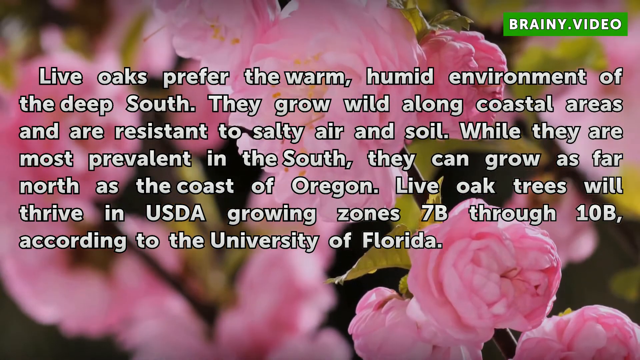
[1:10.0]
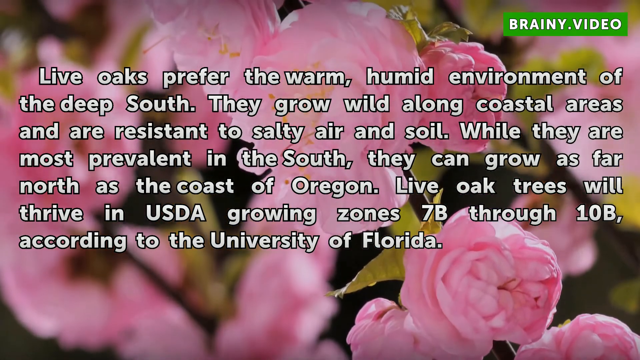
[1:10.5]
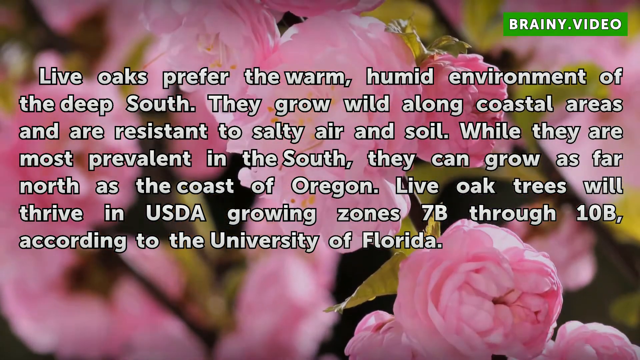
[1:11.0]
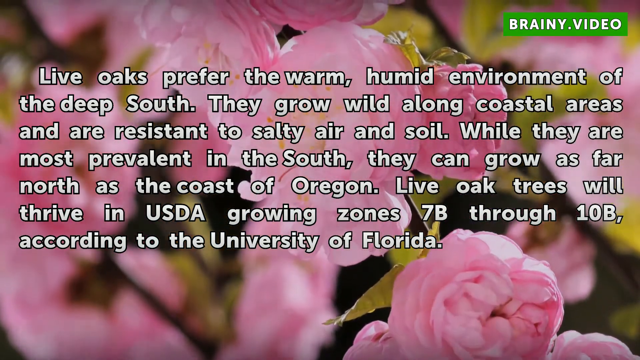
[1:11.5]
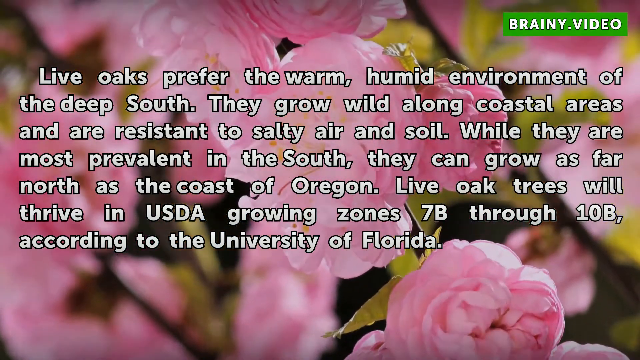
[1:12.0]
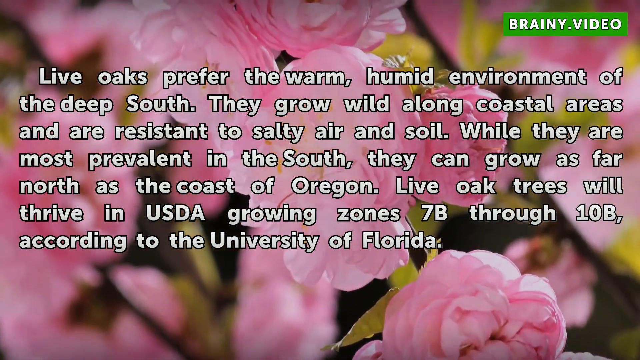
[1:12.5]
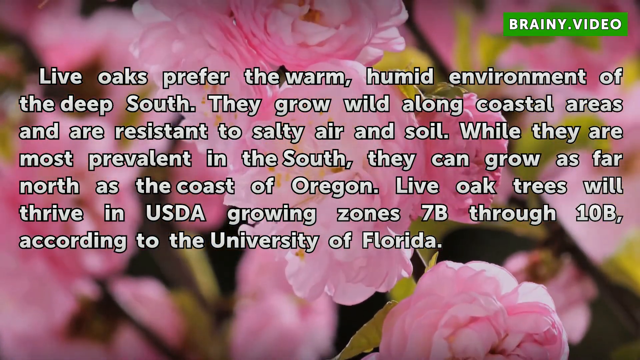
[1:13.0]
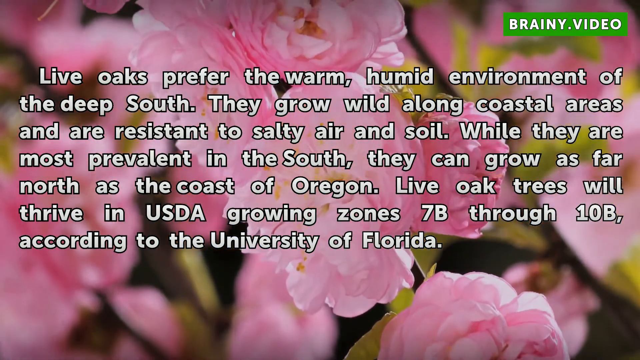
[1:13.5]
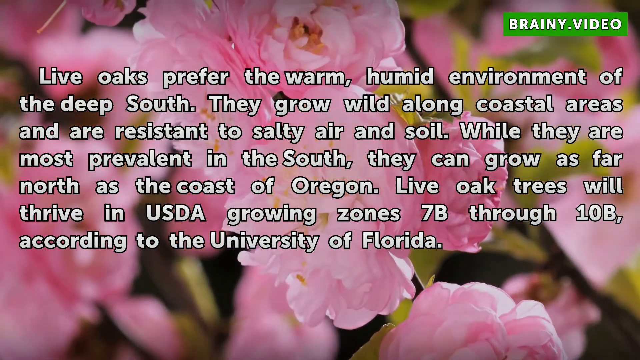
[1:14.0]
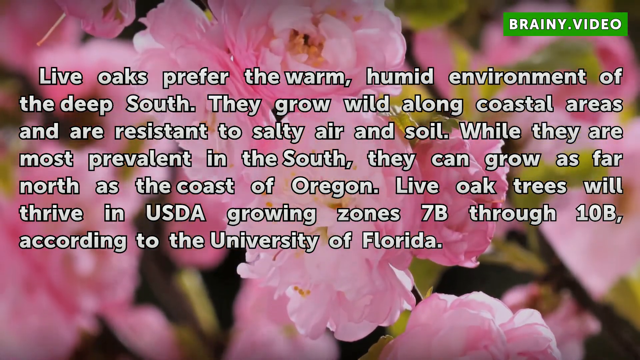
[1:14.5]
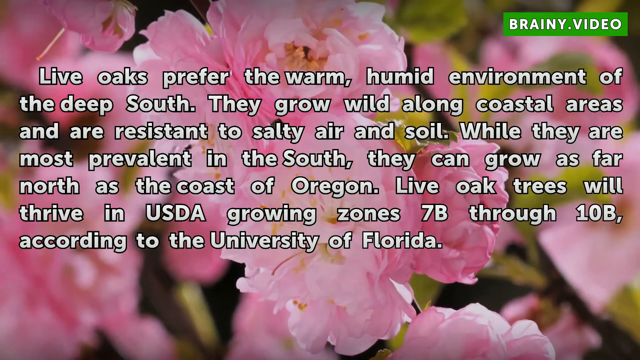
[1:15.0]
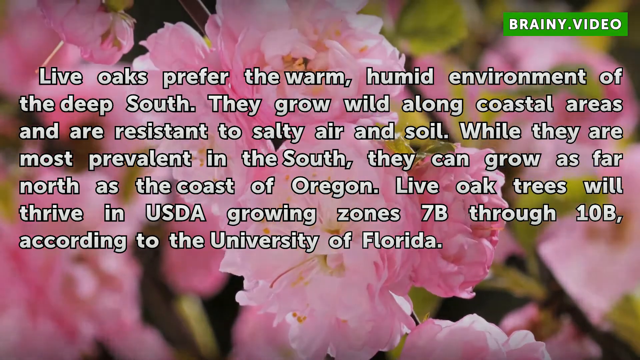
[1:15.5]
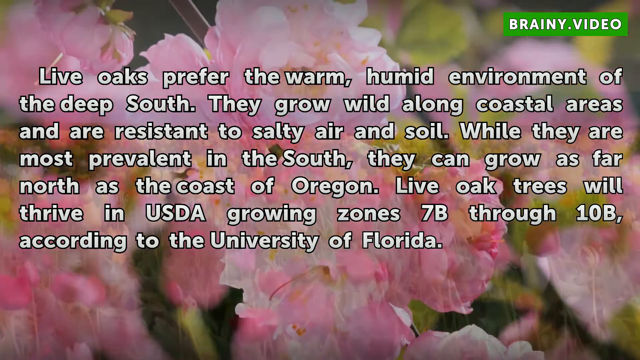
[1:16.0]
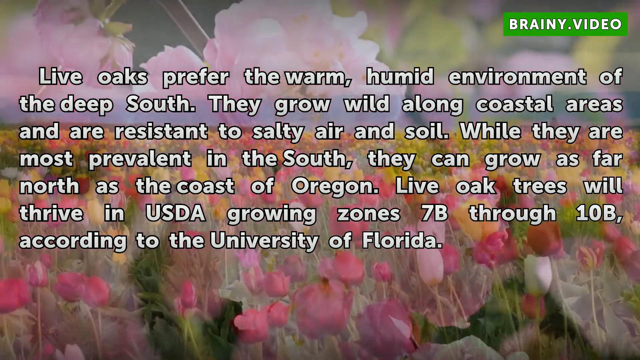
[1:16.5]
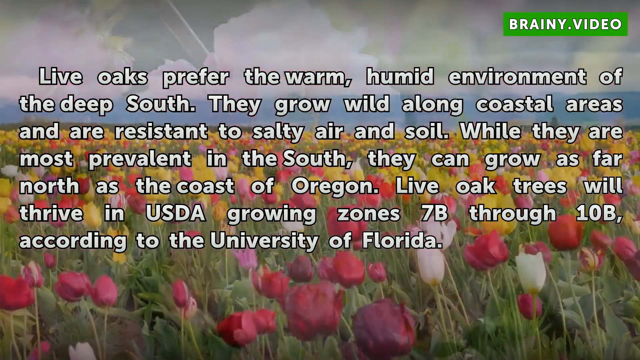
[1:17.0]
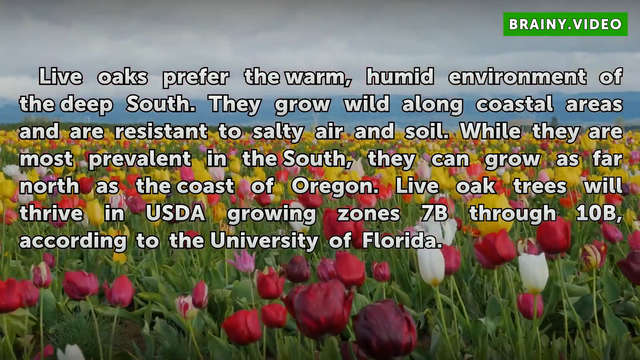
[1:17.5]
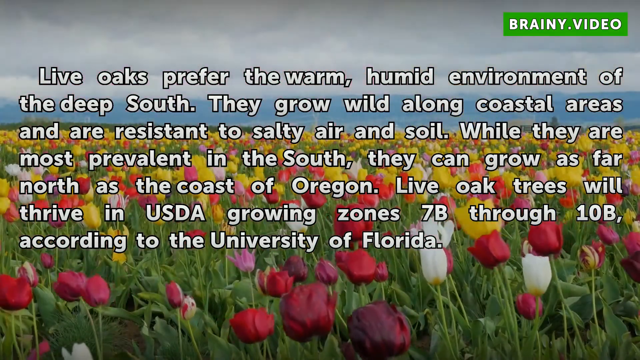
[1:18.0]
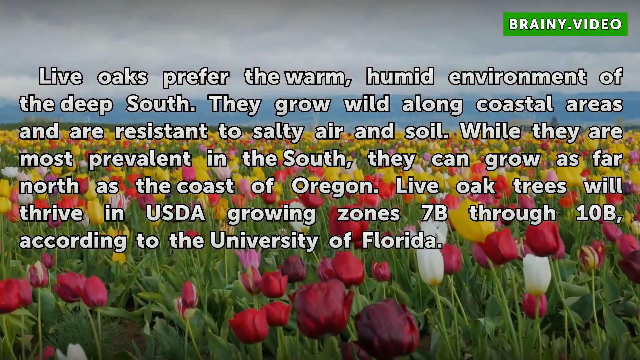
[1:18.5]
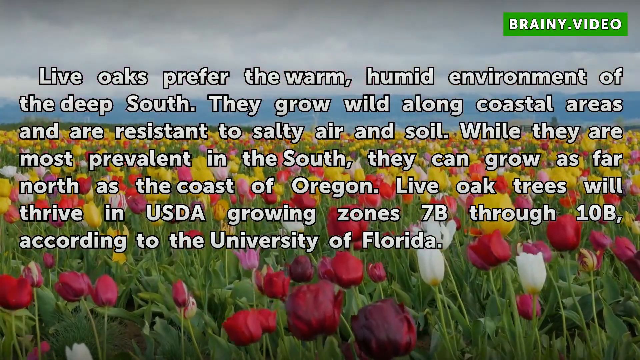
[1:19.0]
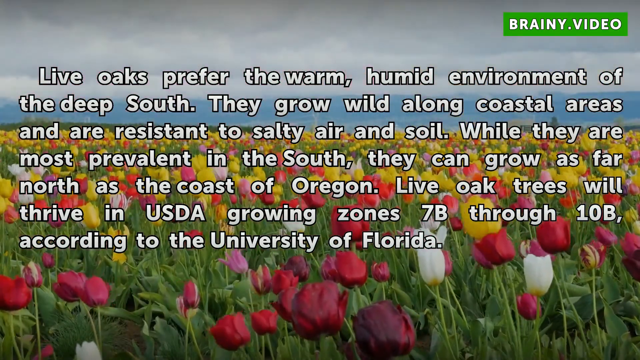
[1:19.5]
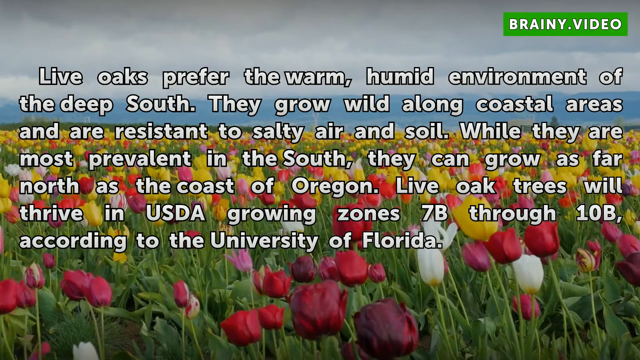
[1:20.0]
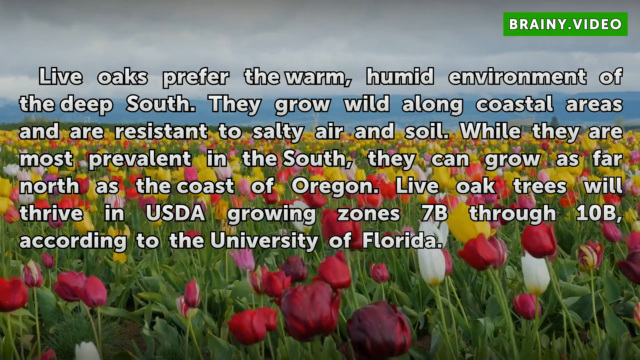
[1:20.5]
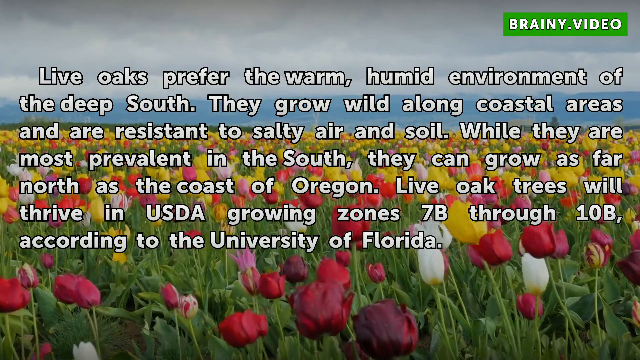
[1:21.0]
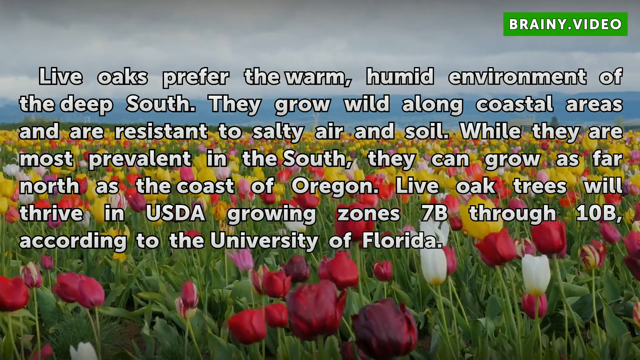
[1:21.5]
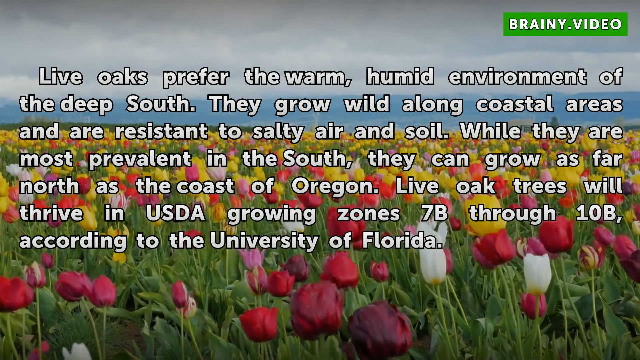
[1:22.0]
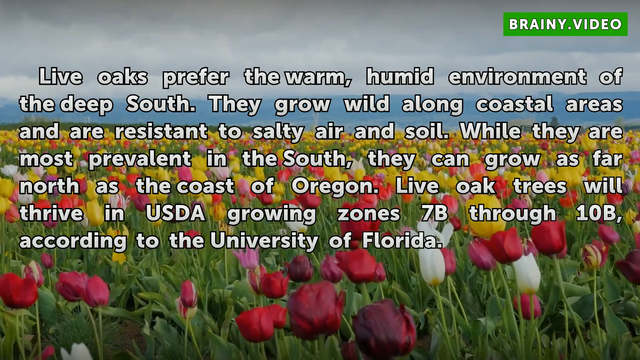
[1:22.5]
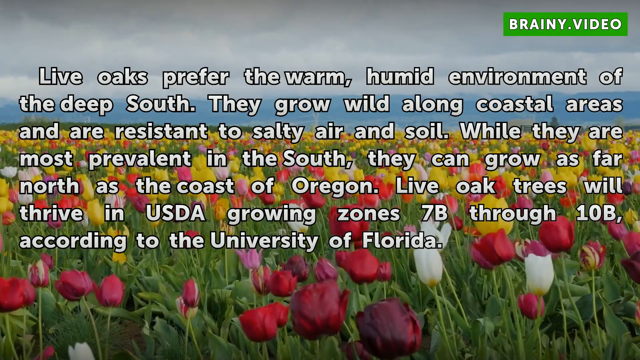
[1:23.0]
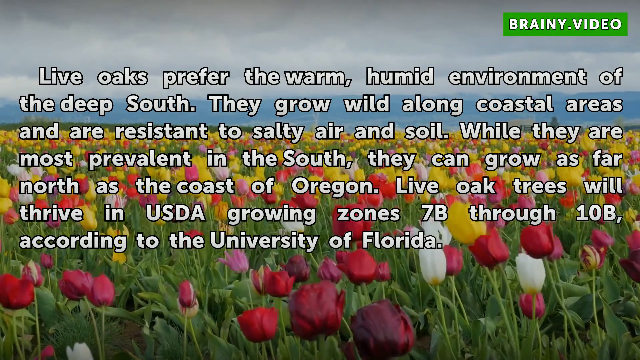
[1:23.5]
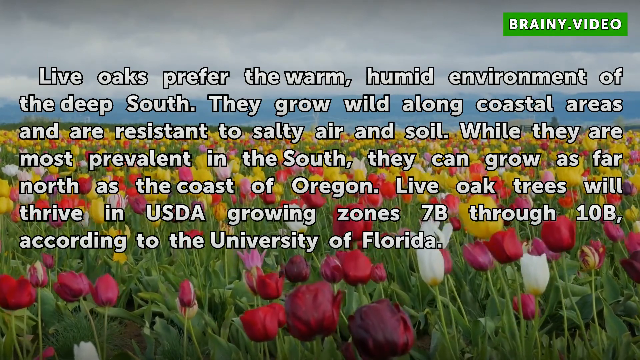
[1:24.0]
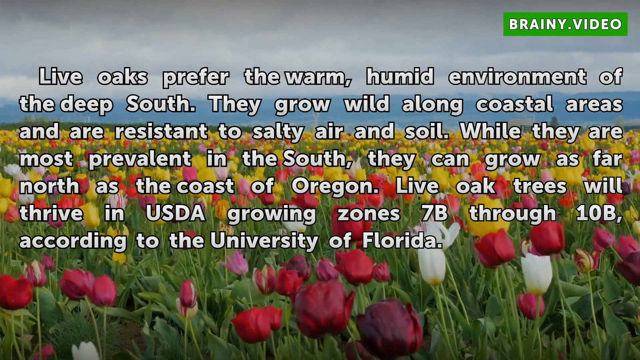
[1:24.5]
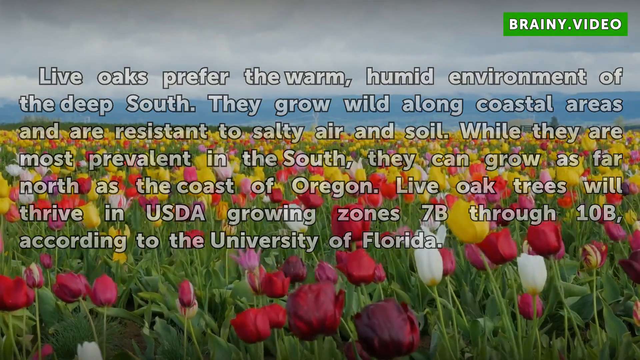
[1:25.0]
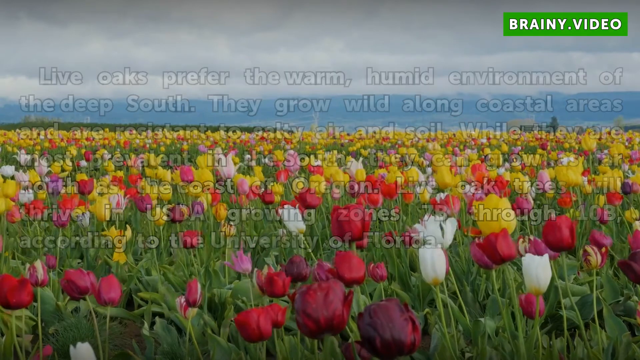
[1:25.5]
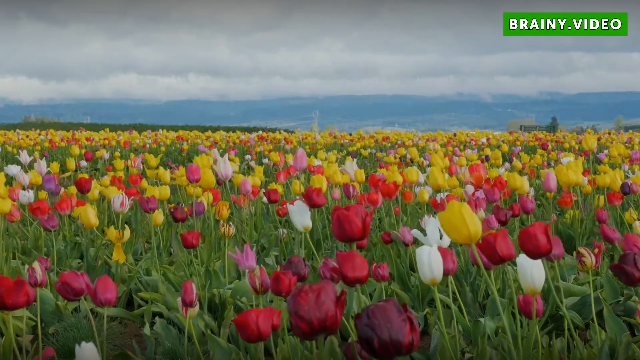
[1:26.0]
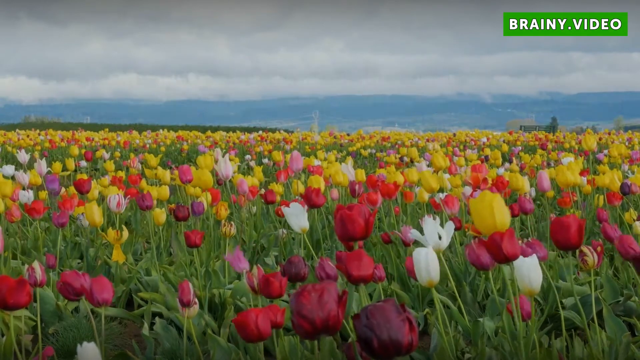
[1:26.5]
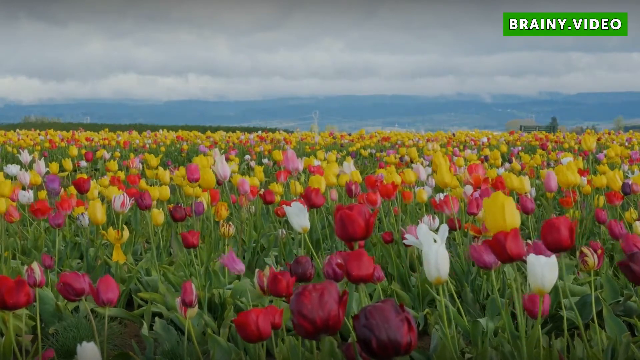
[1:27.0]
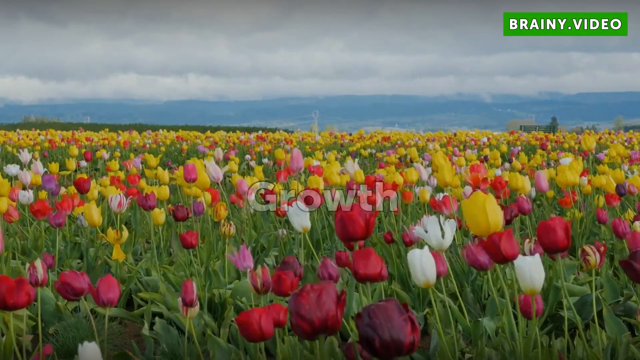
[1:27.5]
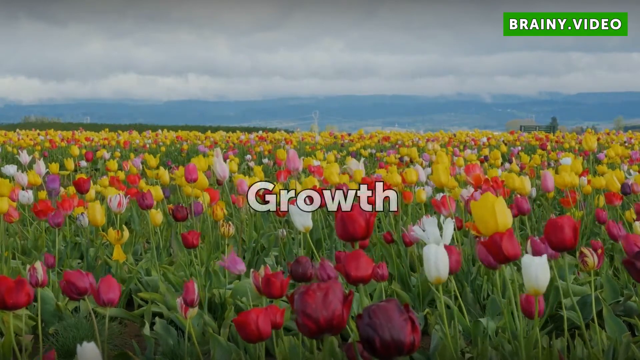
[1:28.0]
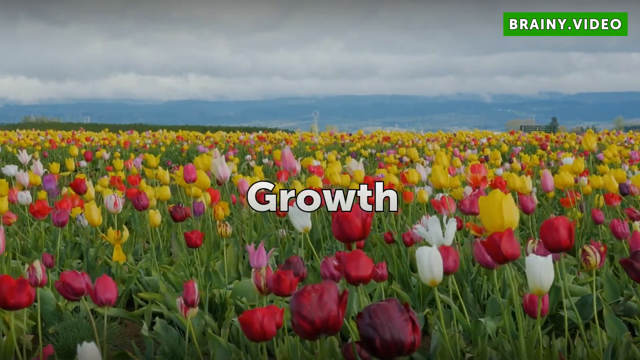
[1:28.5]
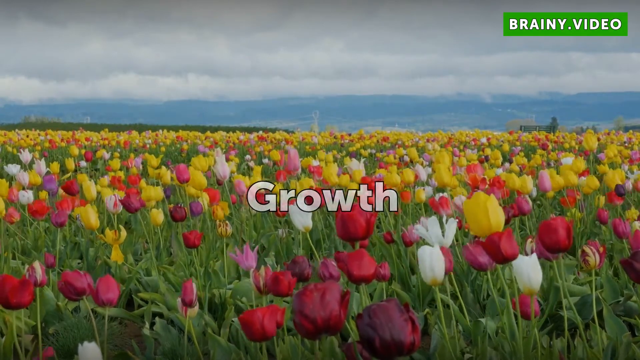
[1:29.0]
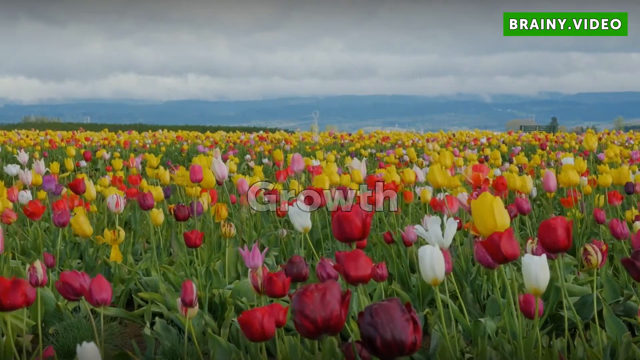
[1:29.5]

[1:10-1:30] The camera continues moving upward as the pink flowers bloom, in what is kind of like a time lapse. The background video then changes to a field of very colorful flowers, white, red, purple and yellow, moving with the wind. The text stays on the screen unchanged, then disappears, and the word "growth" appears in the middle. The colorful flowers keep moving in the wind beneath a light blue sky. In the background there appears to be a mountain range or hills, and there also appear to be some buildings very far in the distance to the right.